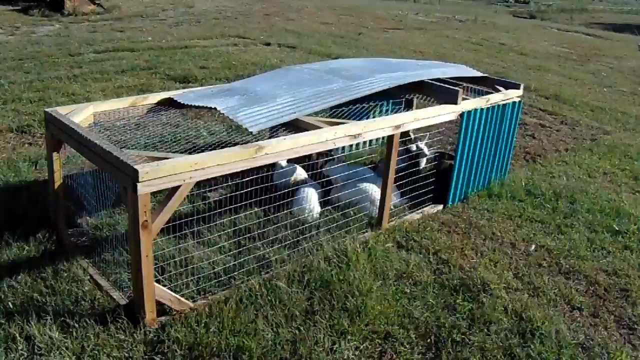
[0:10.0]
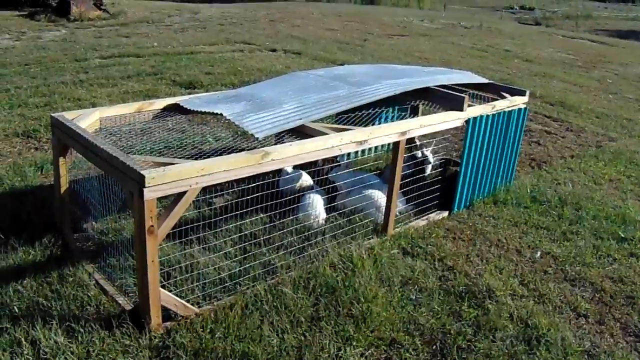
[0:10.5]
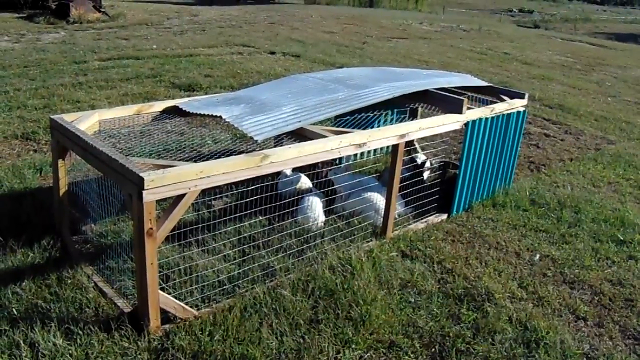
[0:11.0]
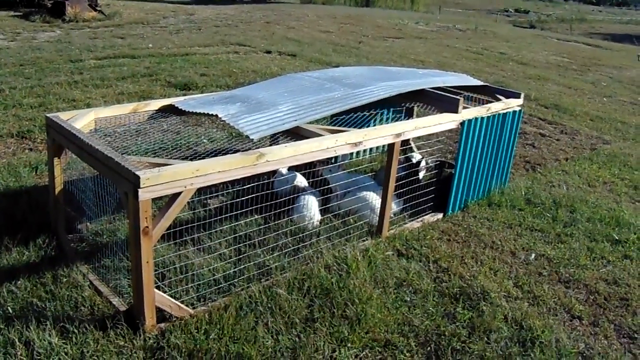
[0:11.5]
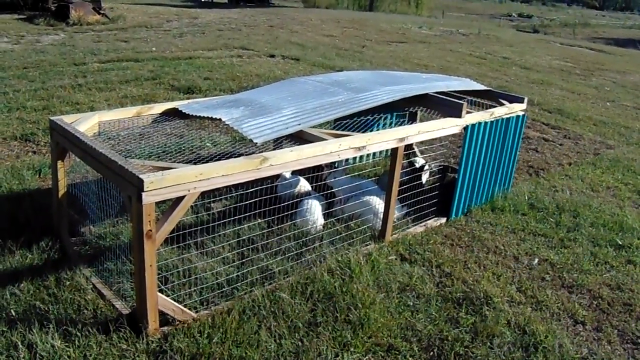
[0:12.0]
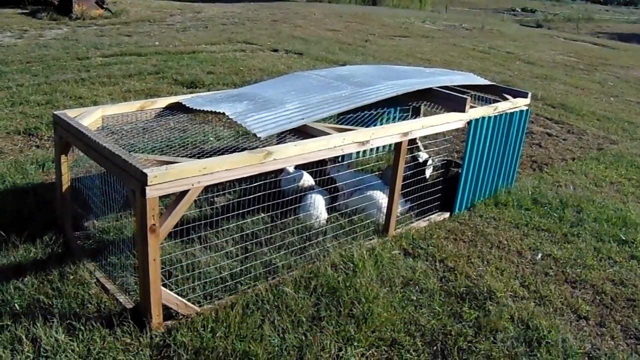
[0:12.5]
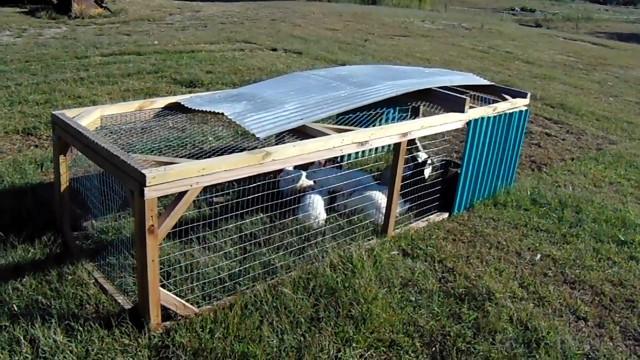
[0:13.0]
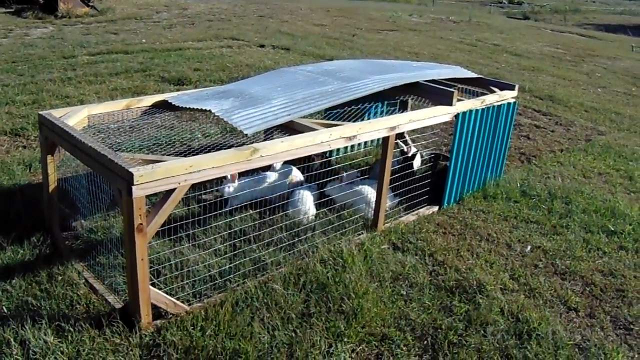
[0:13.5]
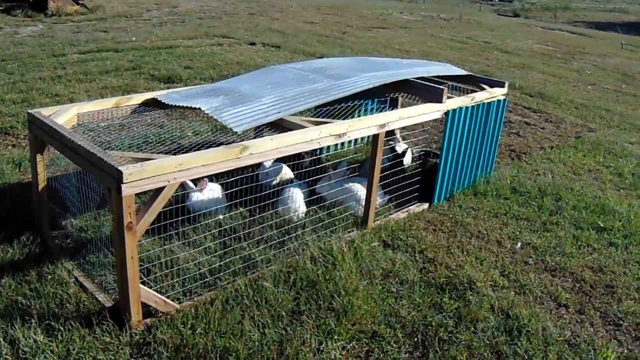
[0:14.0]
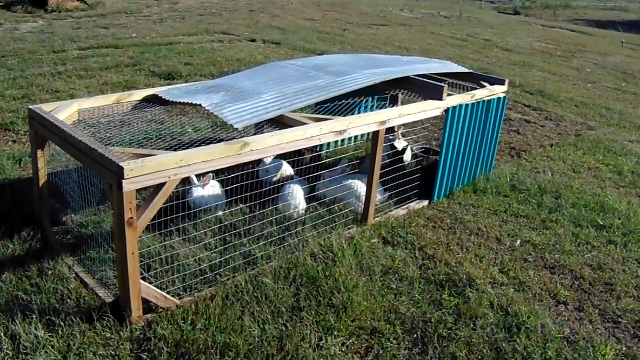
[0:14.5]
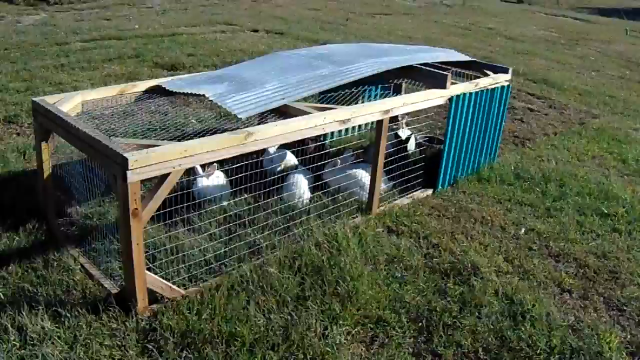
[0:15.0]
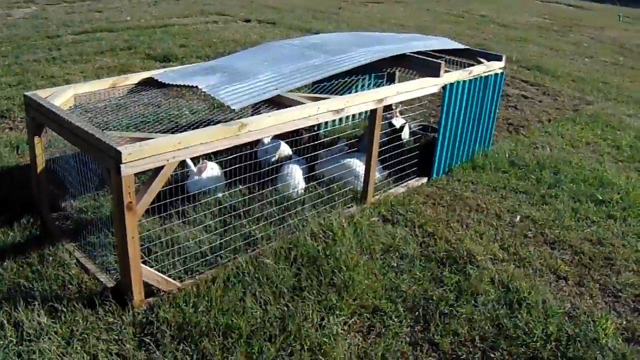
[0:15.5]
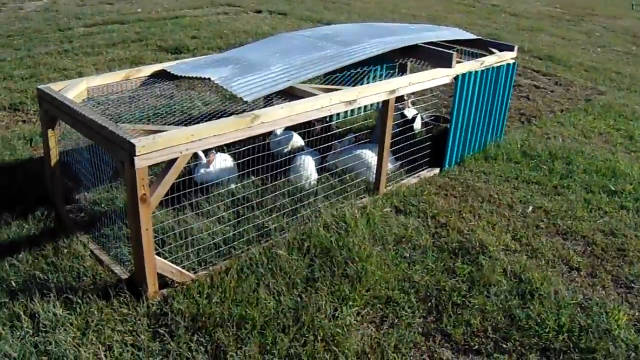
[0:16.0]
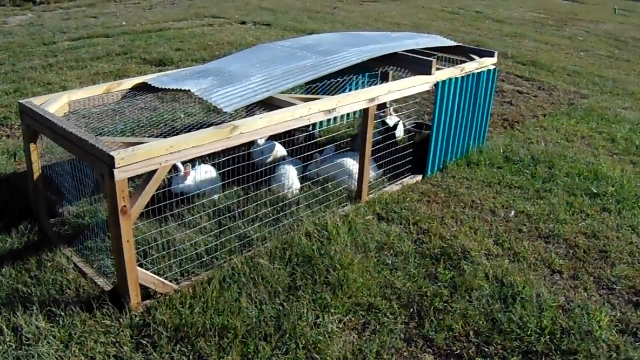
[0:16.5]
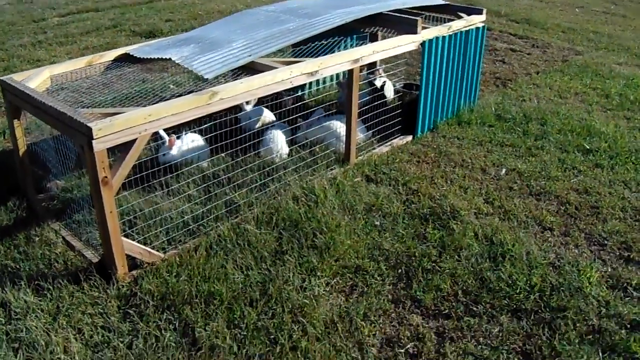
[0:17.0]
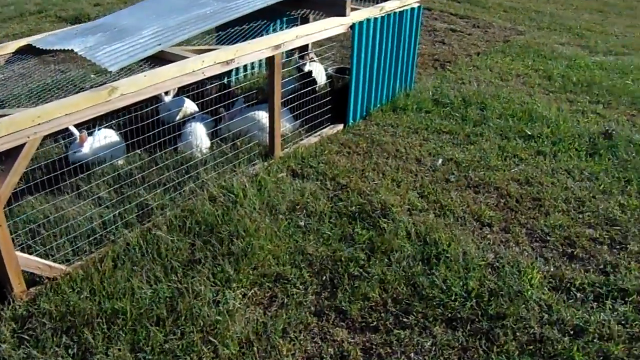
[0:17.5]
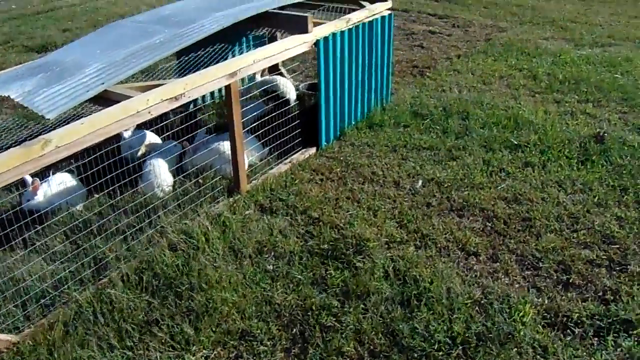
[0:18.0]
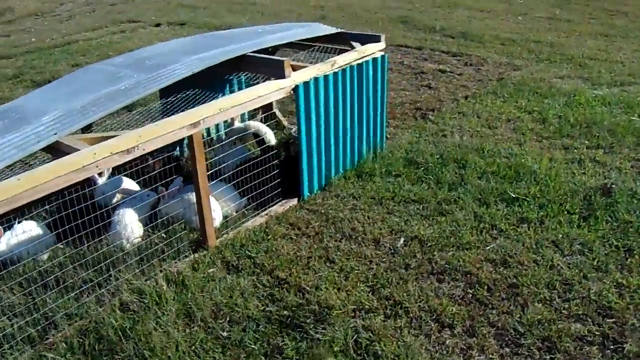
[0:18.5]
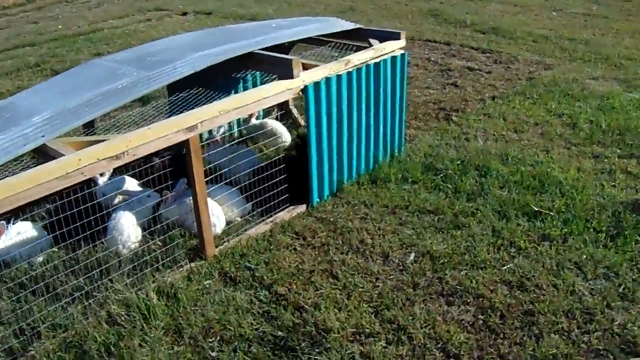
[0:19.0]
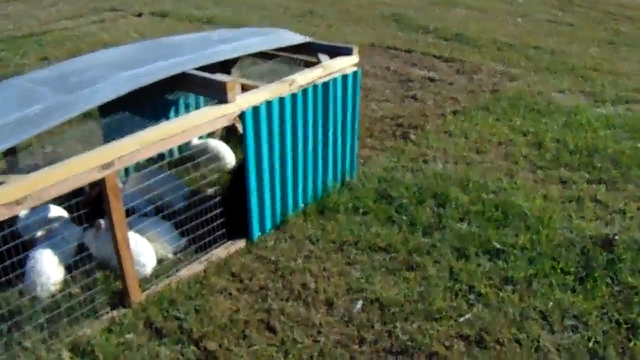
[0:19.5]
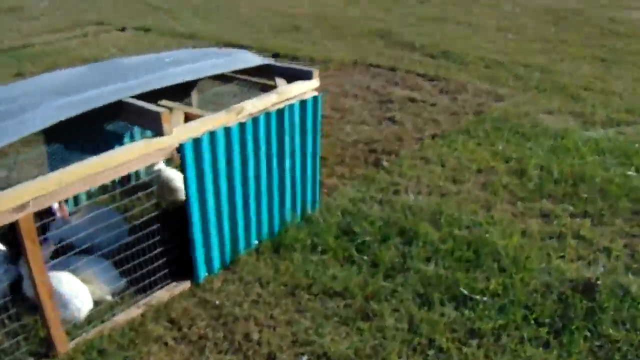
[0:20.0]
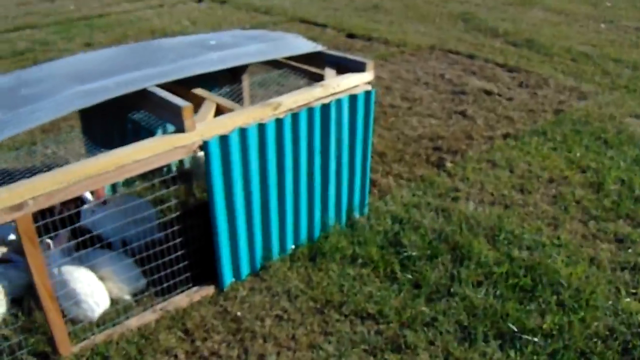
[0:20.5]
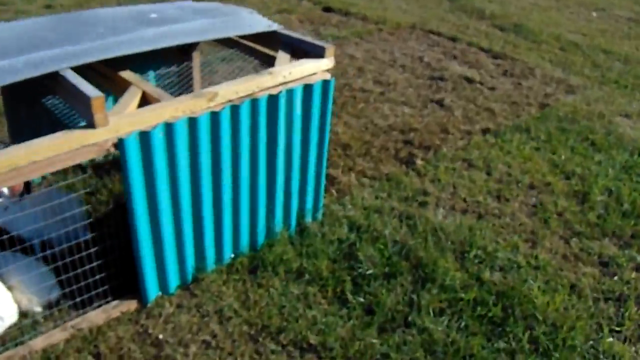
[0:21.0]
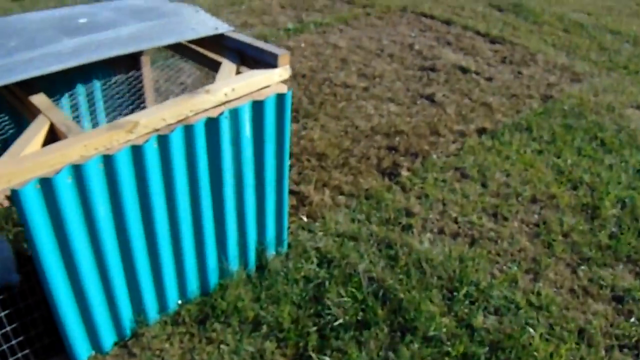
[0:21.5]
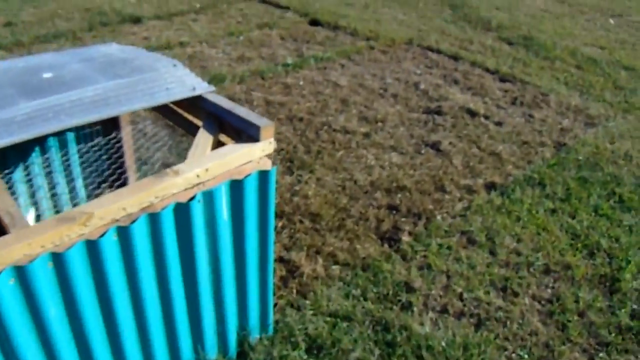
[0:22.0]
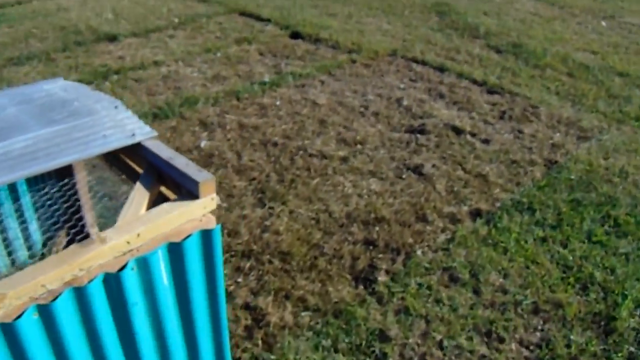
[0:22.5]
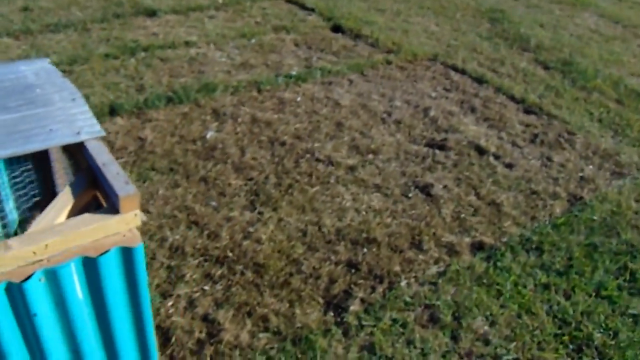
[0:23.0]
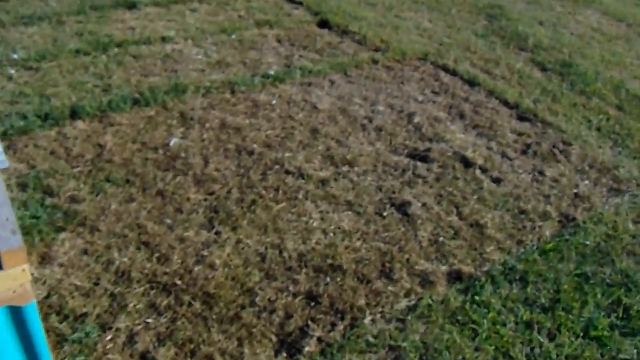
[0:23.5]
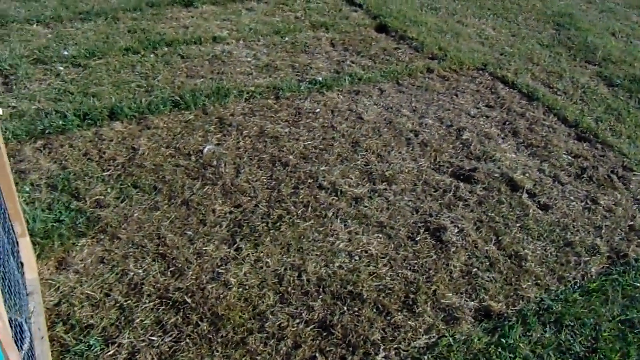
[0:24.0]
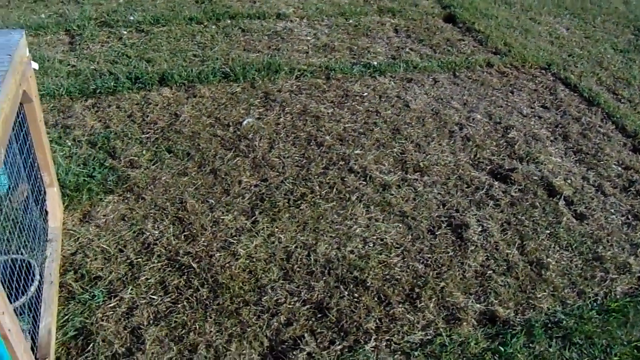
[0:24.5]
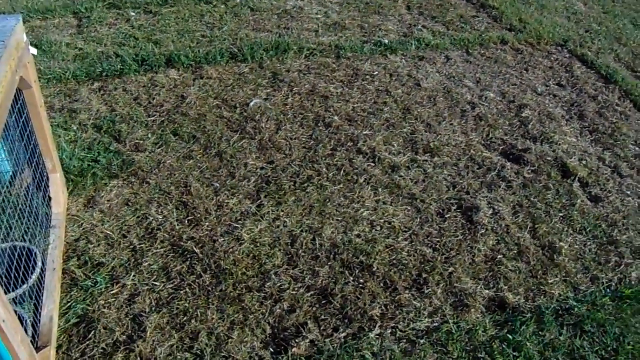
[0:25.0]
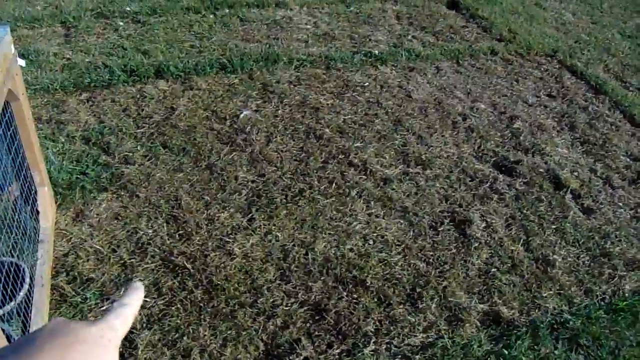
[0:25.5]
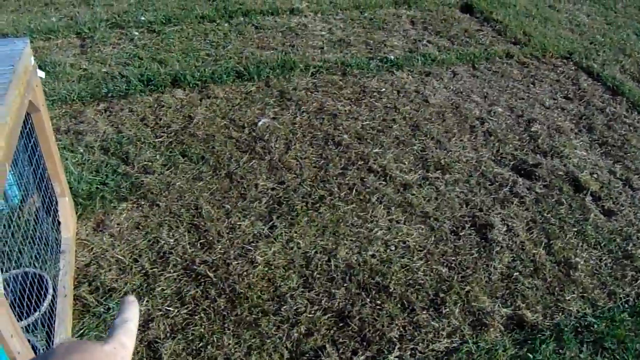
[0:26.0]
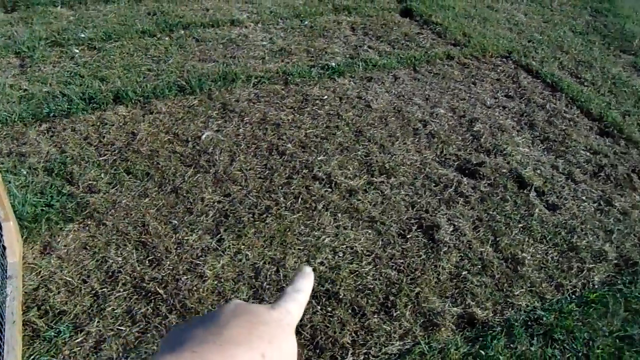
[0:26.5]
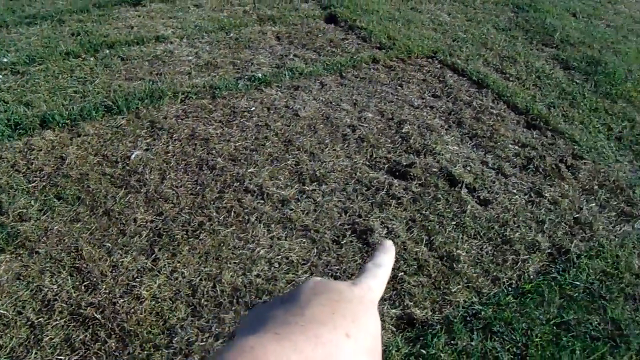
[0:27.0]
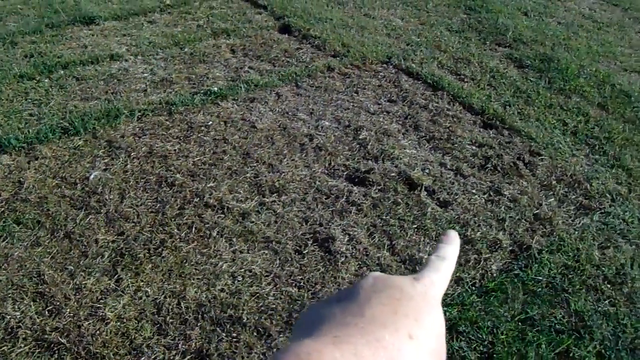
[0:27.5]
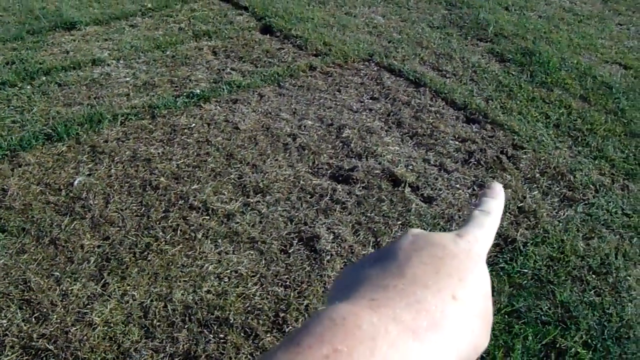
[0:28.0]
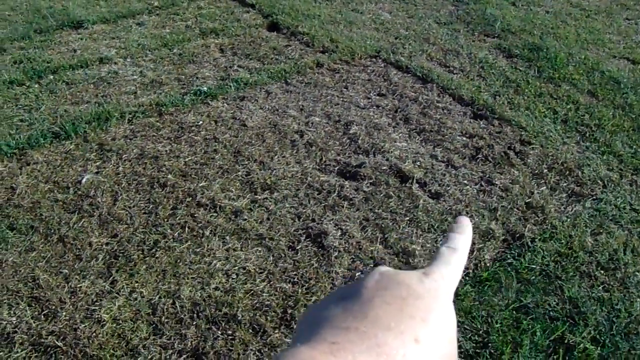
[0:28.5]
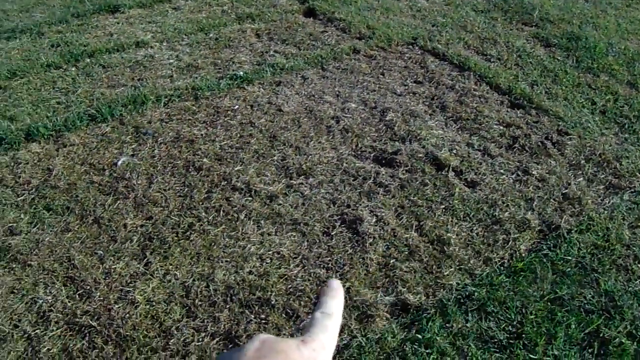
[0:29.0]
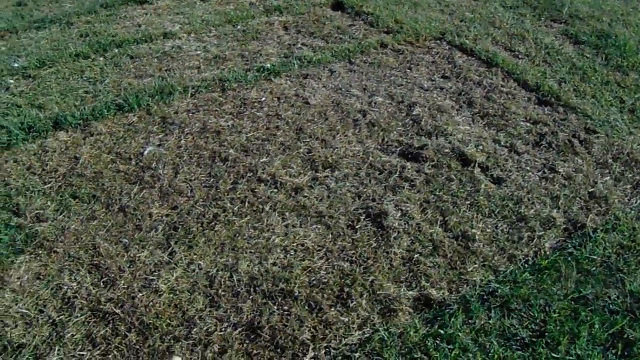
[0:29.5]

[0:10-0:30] A cage-like structure is positioned on a grassy field. It is formed by wooden beams joined into a sort of frame, with regular nets between the beams, probably made of very thin iron wire. At the top is a light iron panel, and at the end of the cage other panels in light blue and green are attached to the wooden beams. Later, the camera moves forward toward the far right corner of the frame, away from the cage, showing a part of the ground where strips of grass are arranged so that they almost draw rectangular shapes. In the last seconds, a man's hand appears in the lower part of the frame and points at some spots on the ground.